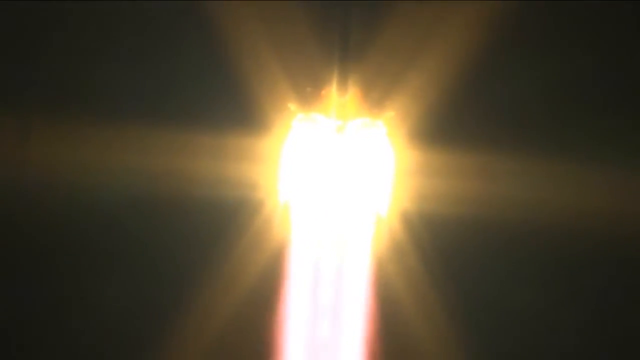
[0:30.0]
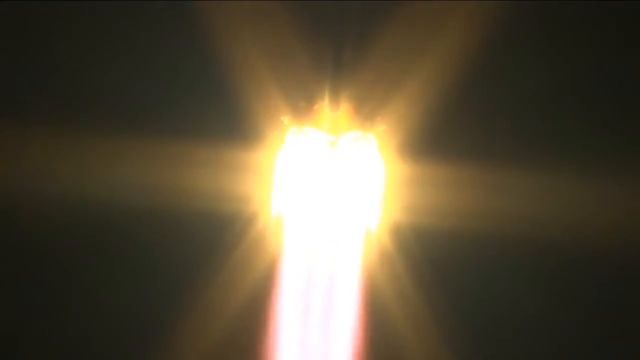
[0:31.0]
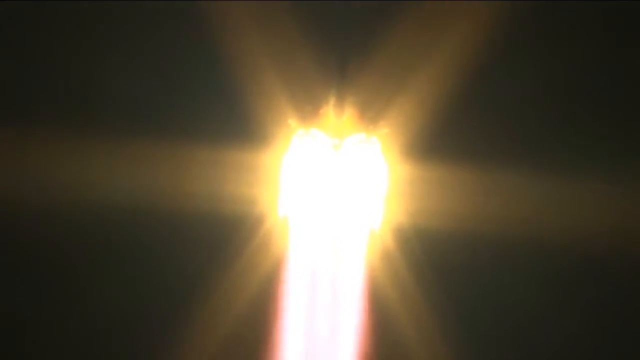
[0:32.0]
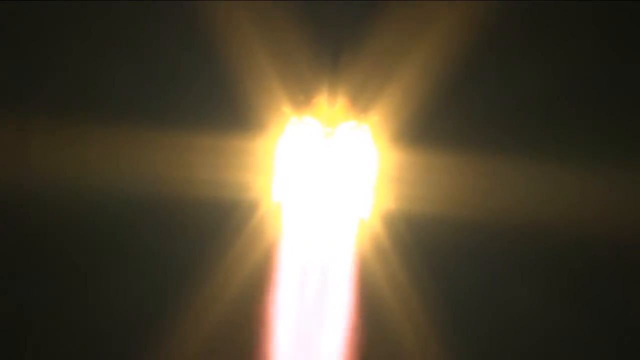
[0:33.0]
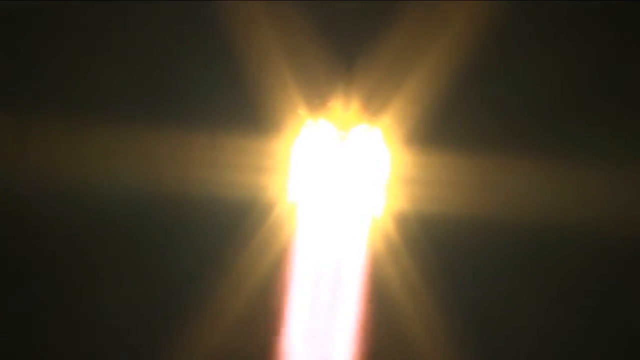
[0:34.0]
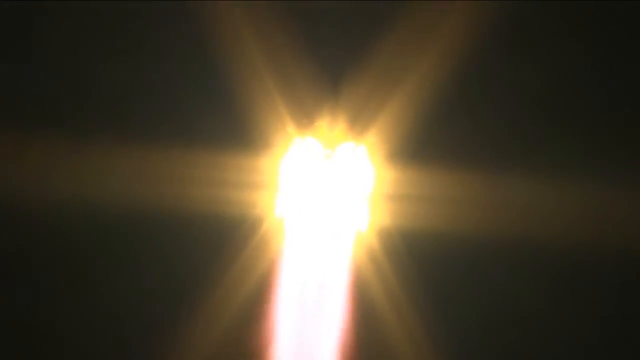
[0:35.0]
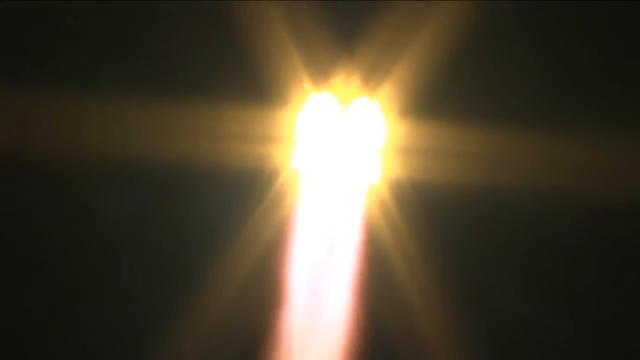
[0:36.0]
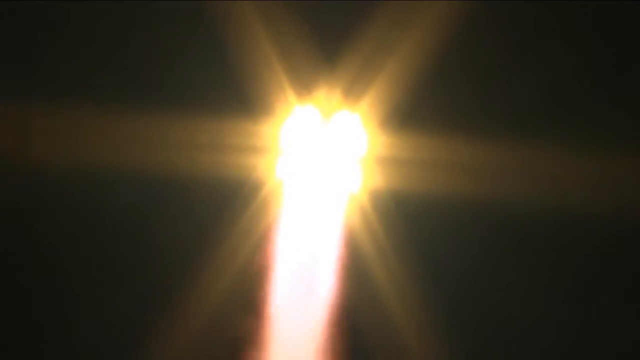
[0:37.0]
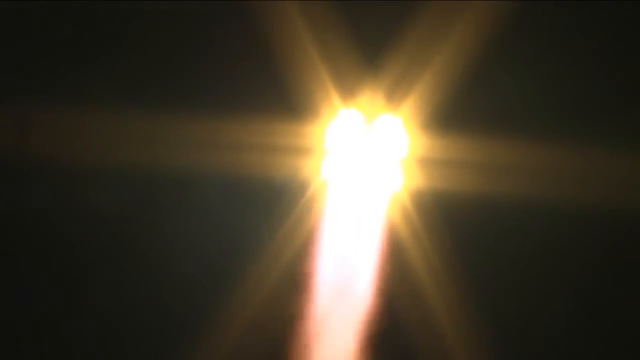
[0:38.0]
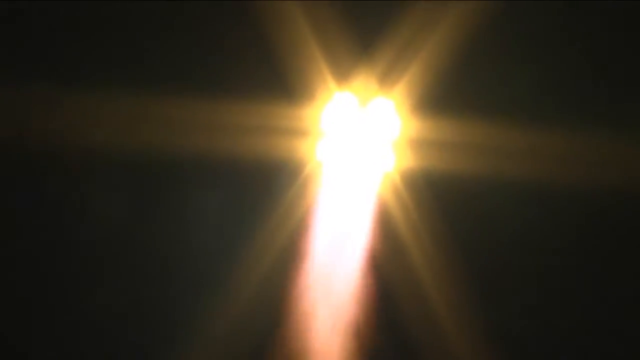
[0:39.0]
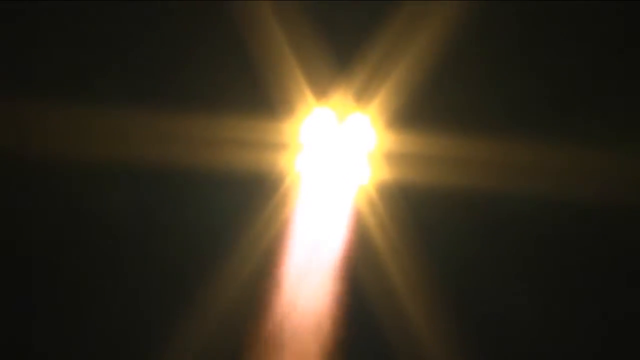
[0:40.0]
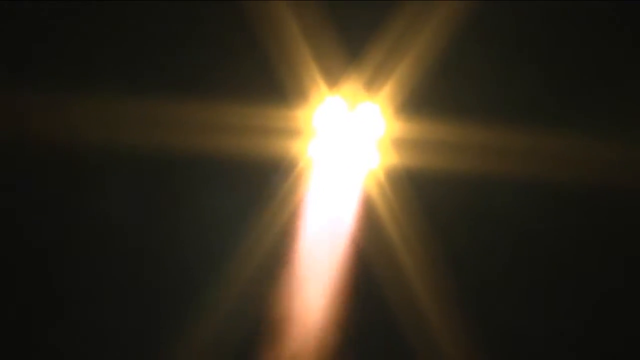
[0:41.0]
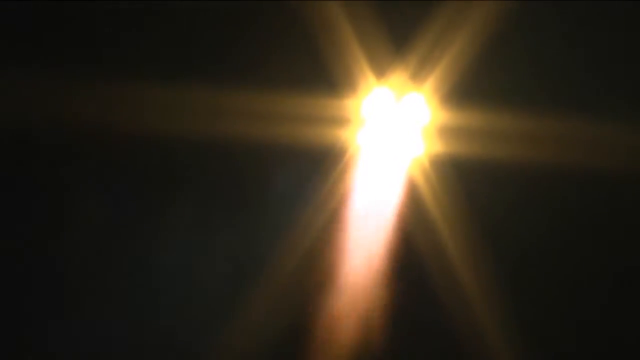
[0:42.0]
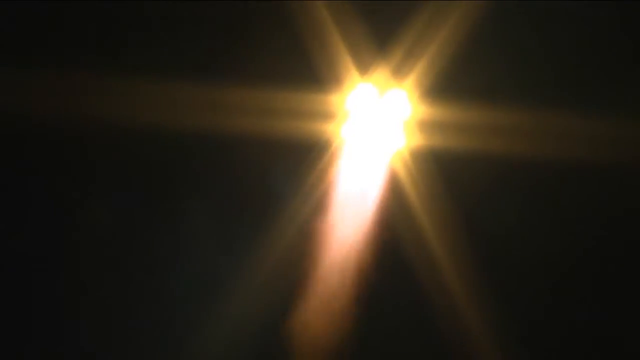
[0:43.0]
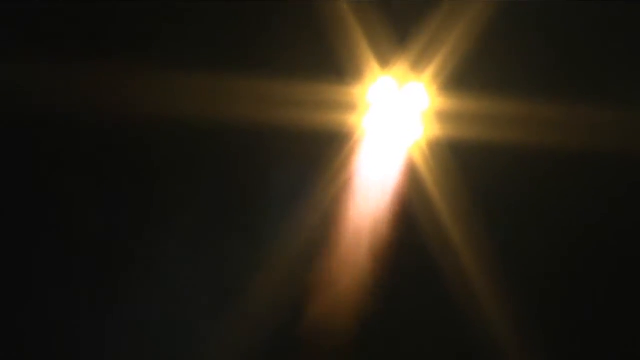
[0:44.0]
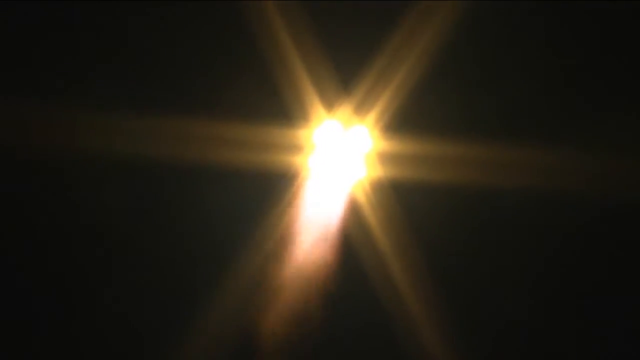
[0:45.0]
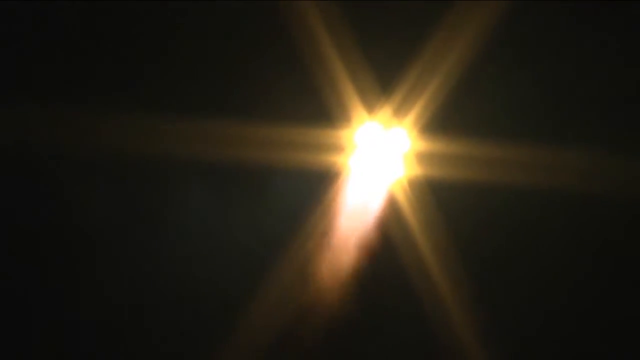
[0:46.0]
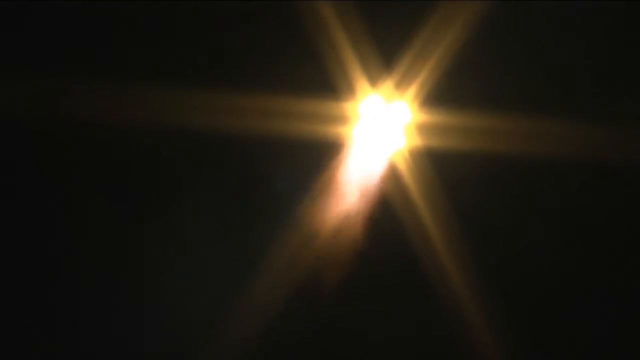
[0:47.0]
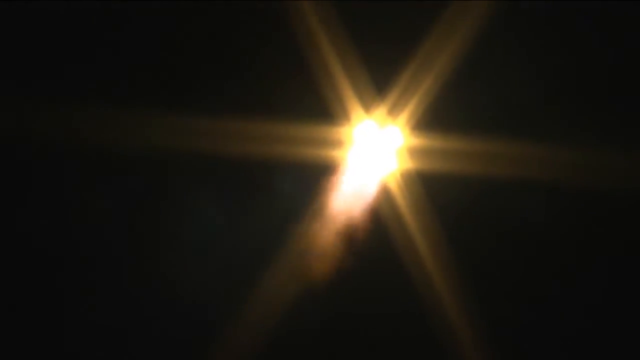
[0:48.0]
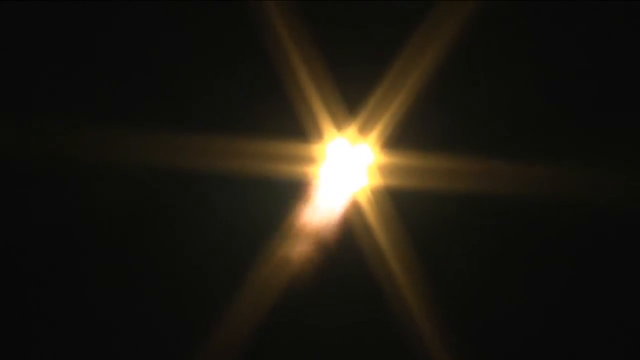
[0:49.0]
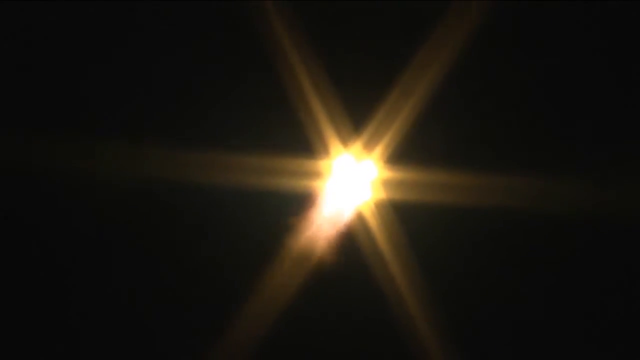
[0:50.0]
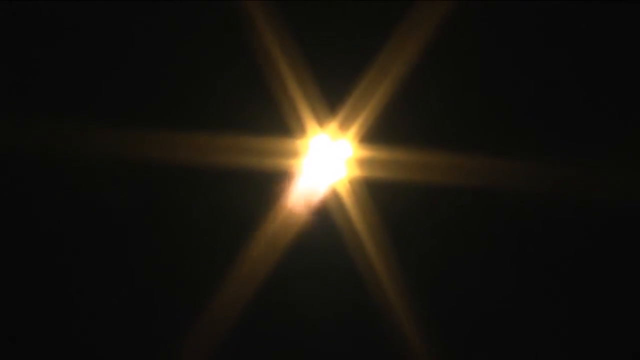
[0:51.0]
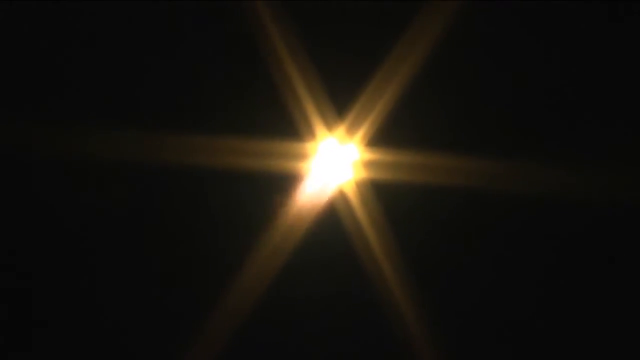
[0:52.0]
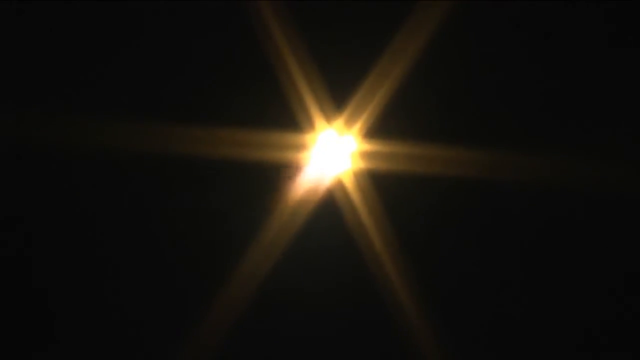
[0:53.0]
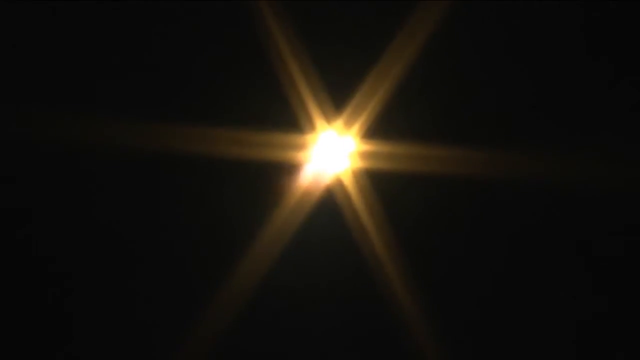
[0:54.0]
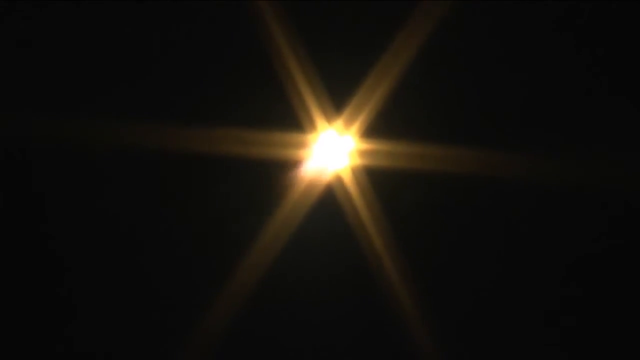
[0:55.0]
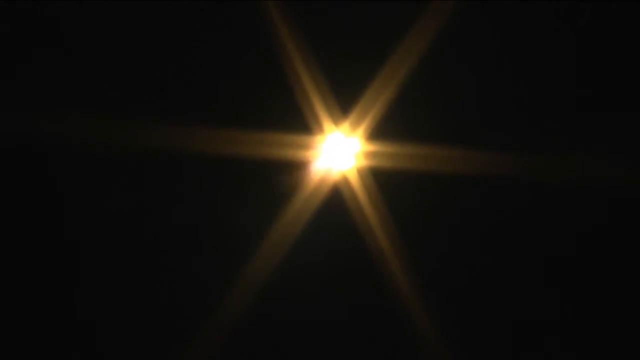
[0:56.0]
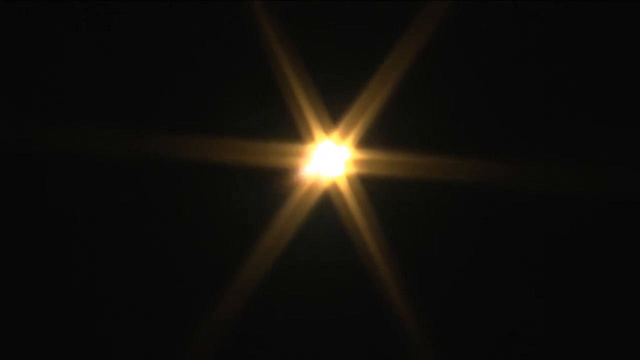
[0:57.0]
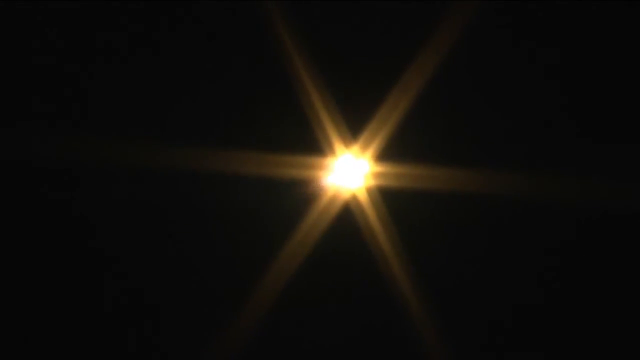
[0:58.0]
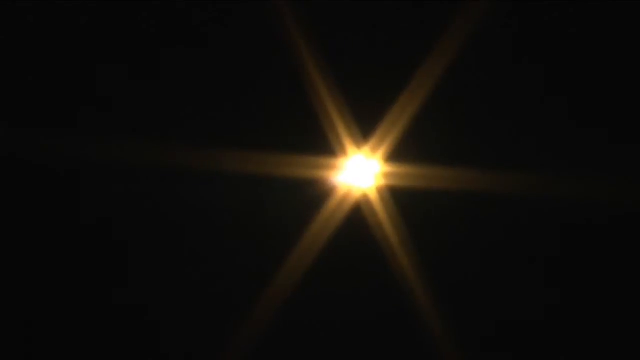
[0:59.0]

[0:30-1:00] The frame is completely filled with what looks almost like a hot burning flame, with a star-like shape around it, as the rocket continues to rise in the sky and the camera tries to focus on the boosters. Some flames are visible coming out at the back, but little can be made out other than the star pattern as the rocket gets further away and higher into the atmosphere. The rocket is moving so fast that the person filming has to readjust the camera to keep it in focus as it moves slightly to the right of the frame. The rocket appears smaller and smaller as it gets further away, and the star pattern becomes more visible, with a burning flame at its very center, which is the booster burning the rocket fuel.